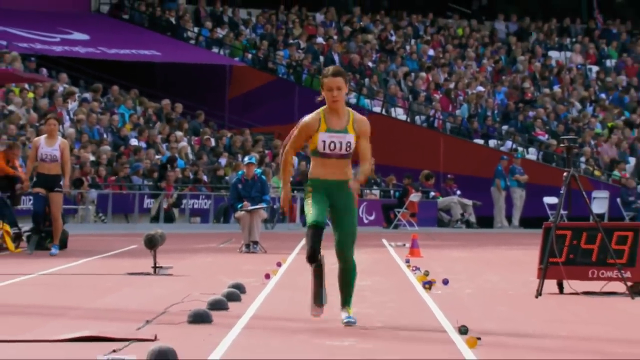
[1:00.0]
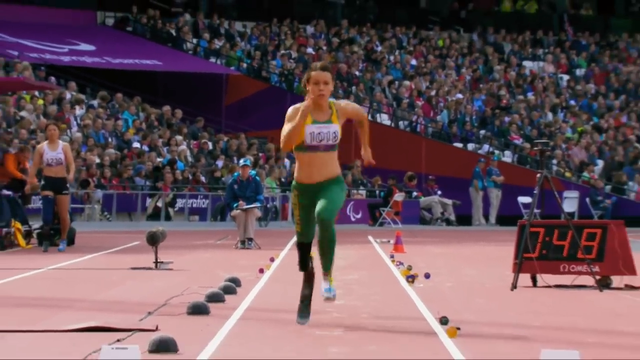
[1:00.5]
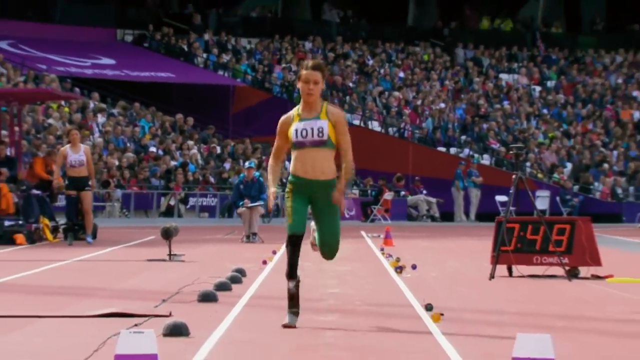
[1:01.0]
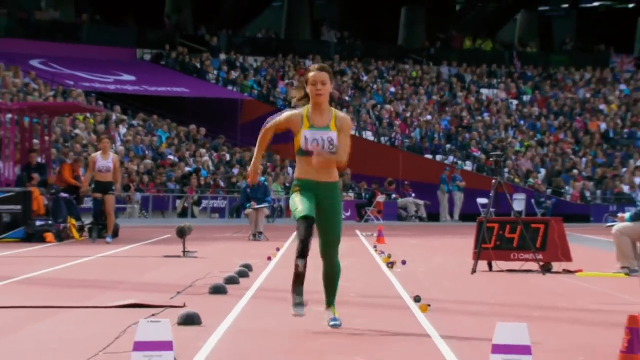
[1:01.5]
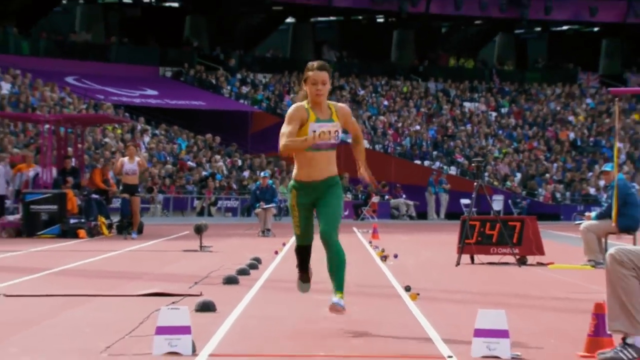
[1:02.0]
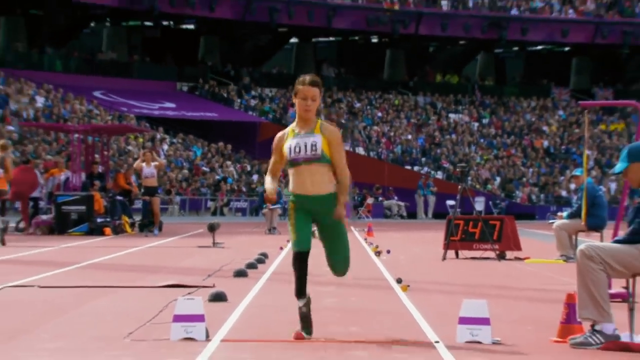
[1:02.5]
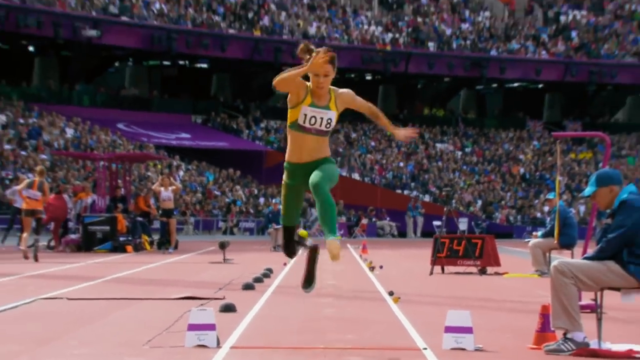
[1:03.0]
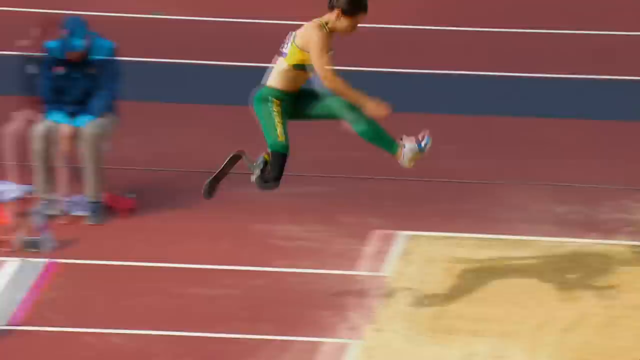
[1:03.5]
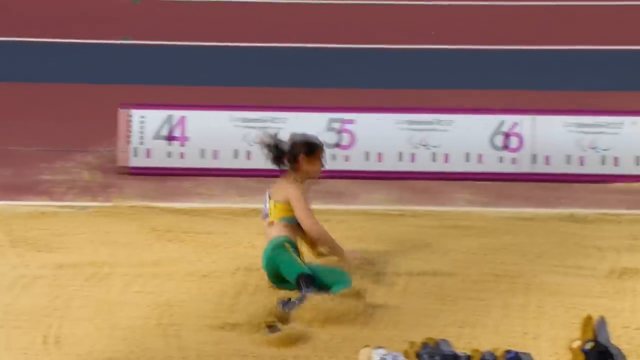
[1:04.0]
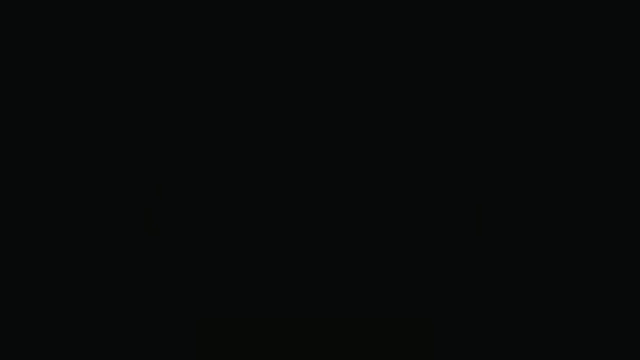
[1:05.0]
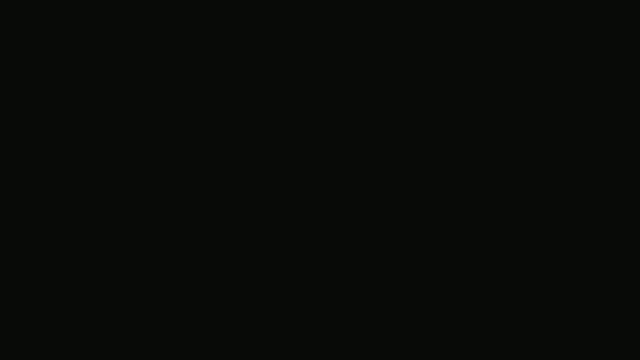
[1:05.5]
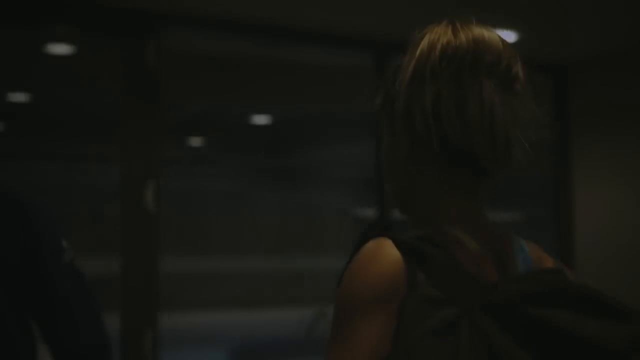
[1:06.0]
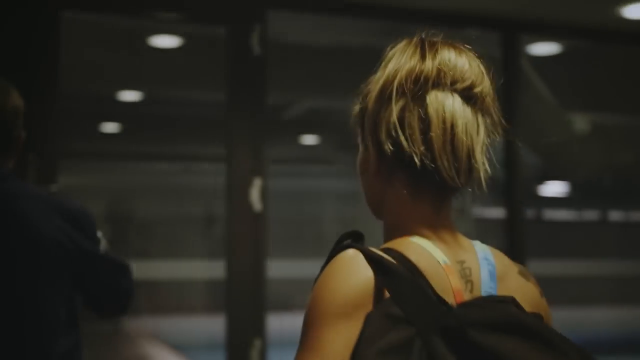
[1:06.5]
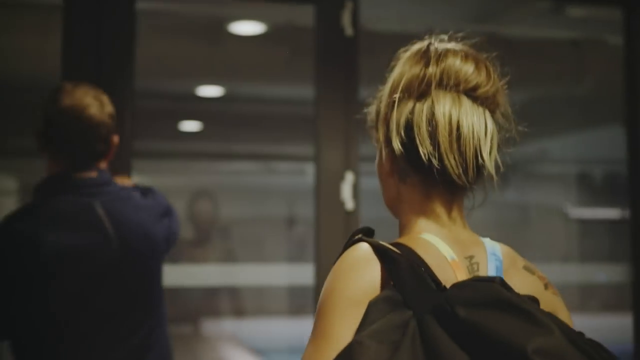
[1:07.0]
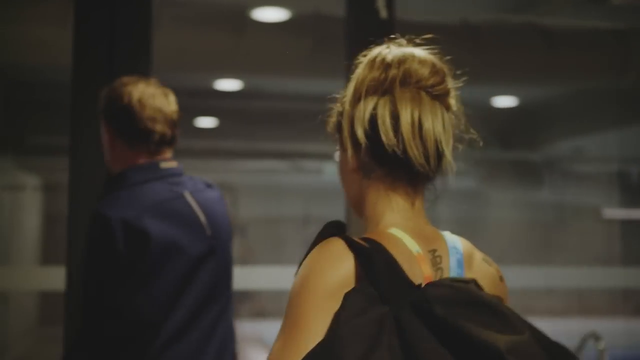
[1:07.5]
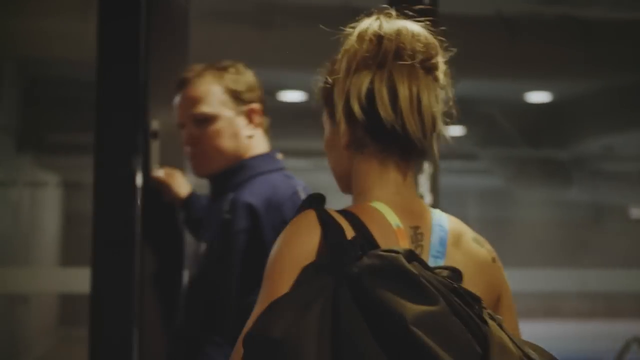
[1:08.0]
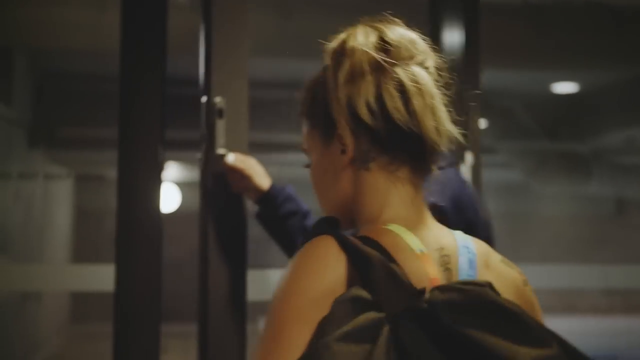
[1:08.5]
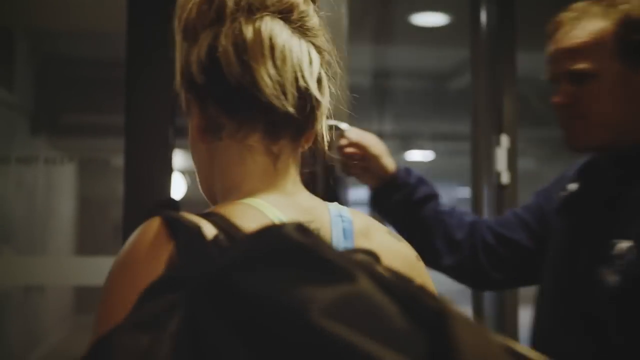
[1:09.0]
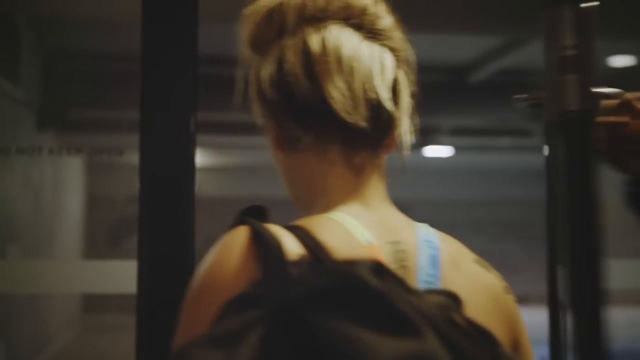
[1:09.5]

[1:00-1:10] A young Paralympic athlete runs down a track in a stadium, with people behind her in the filled stands. She wears a prosthetic leg below her right knee, green leggings, and a yellow top with the number 1018 on it. She then jumps over a barrier into a sand pit in a long jump. The video switches to her and a man walking through a glass door, filmed from behind; the man holds the door open for her as she walks through. She has a black backpack on and her hair is pulled up loosely on top of her head.